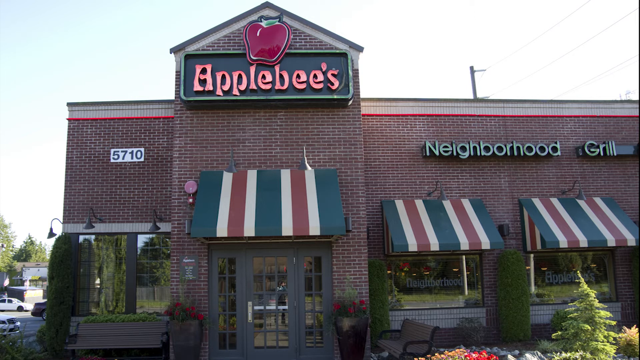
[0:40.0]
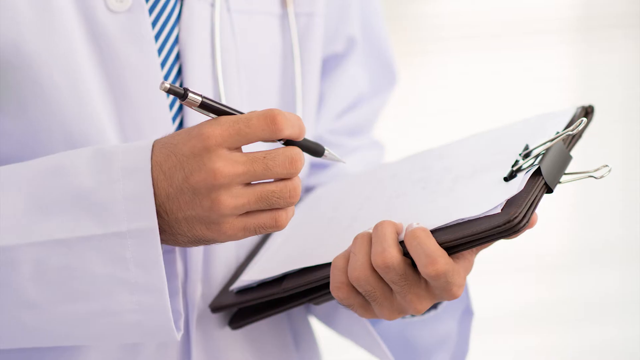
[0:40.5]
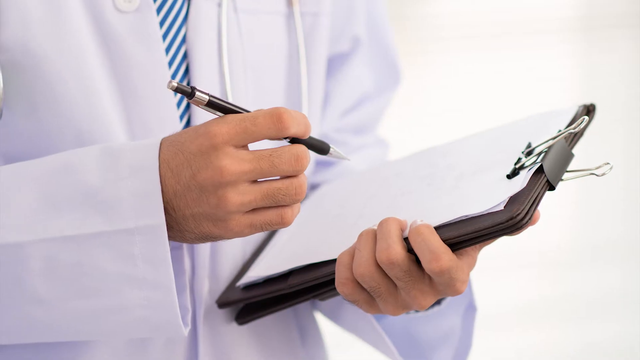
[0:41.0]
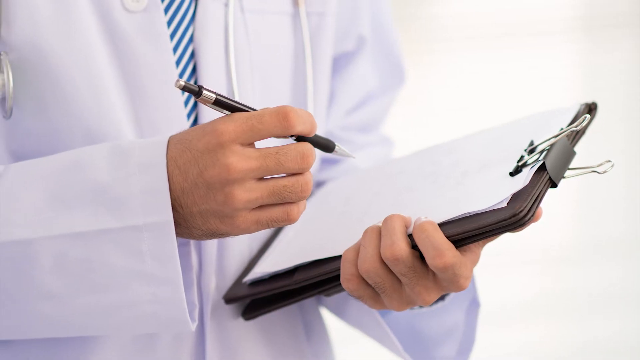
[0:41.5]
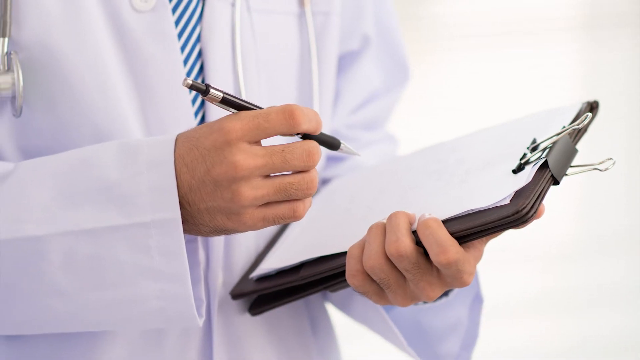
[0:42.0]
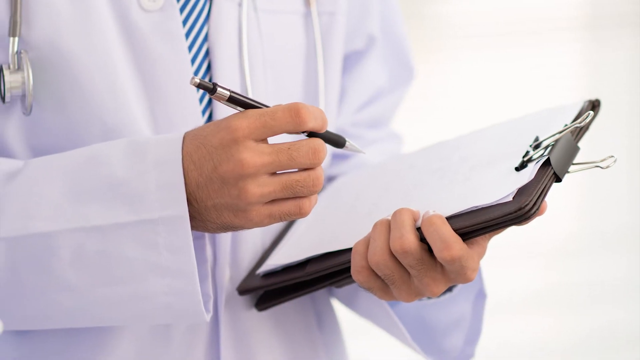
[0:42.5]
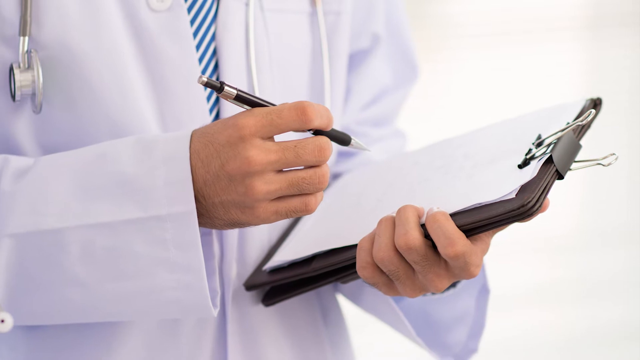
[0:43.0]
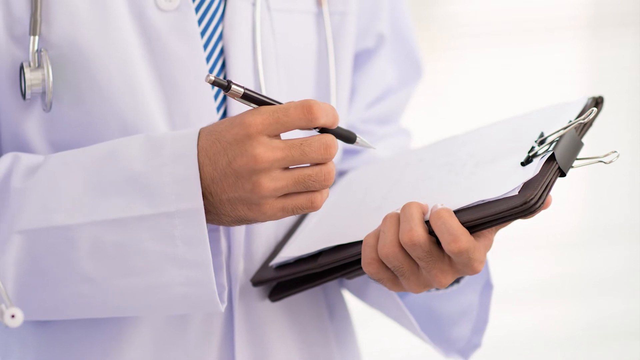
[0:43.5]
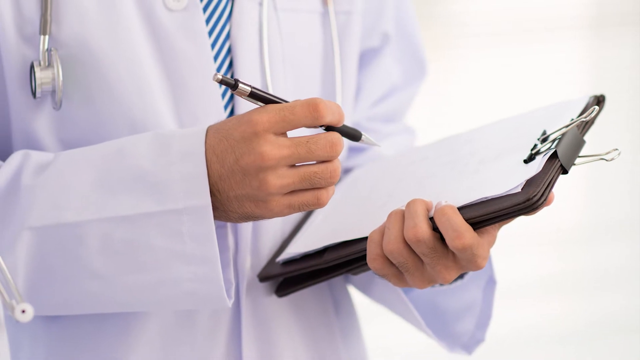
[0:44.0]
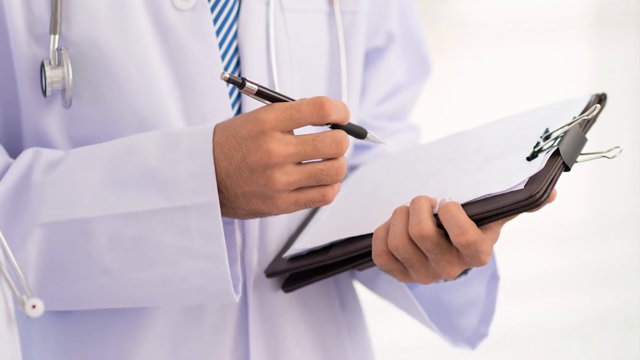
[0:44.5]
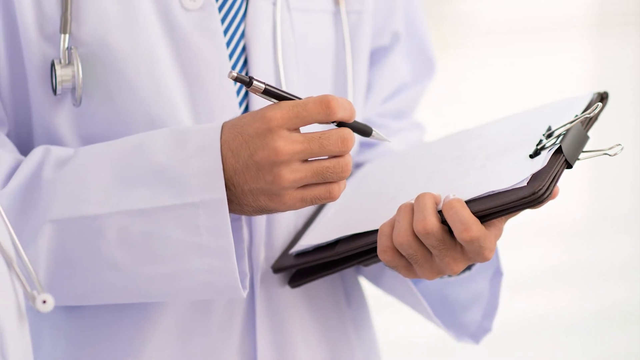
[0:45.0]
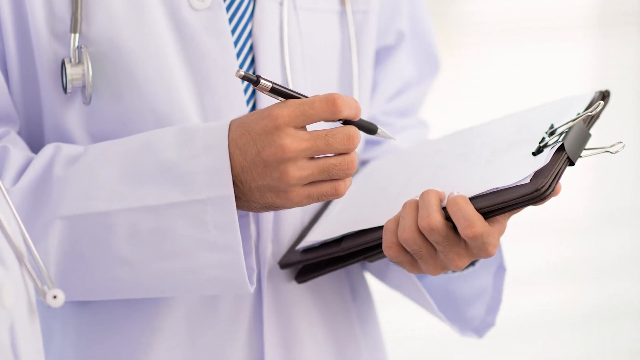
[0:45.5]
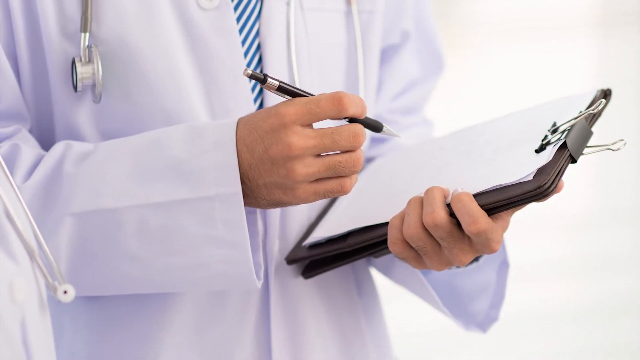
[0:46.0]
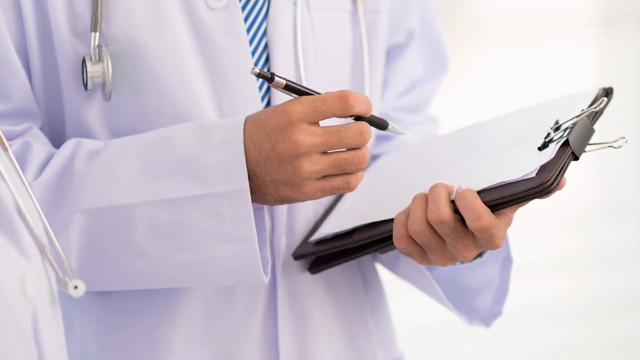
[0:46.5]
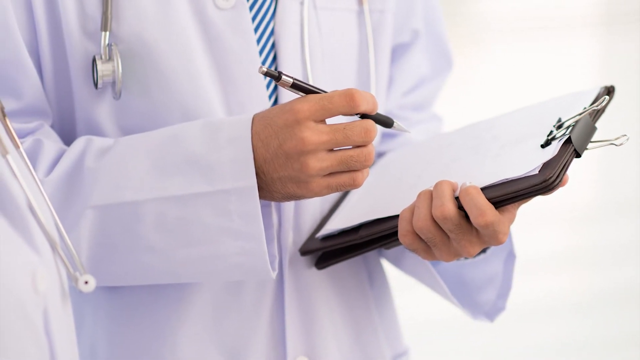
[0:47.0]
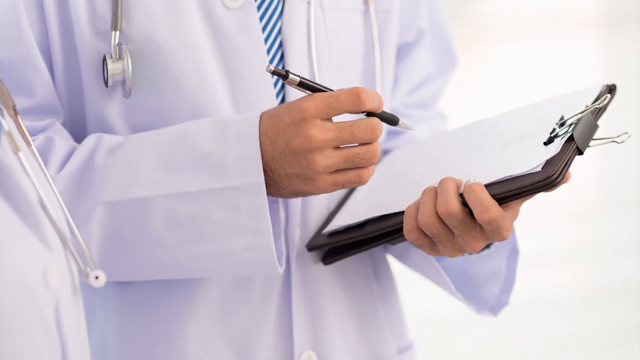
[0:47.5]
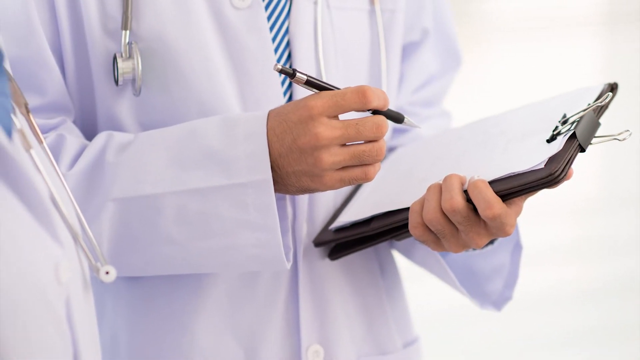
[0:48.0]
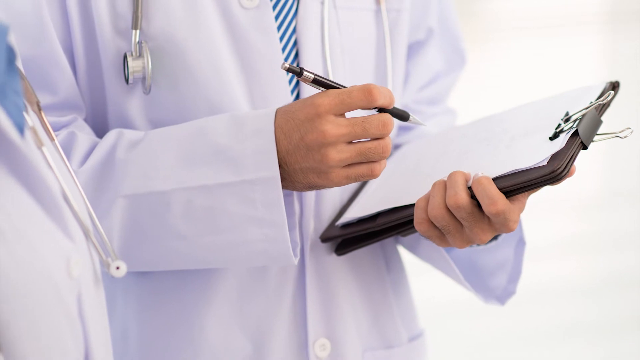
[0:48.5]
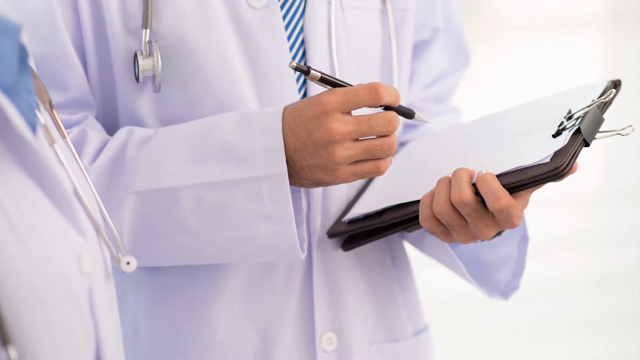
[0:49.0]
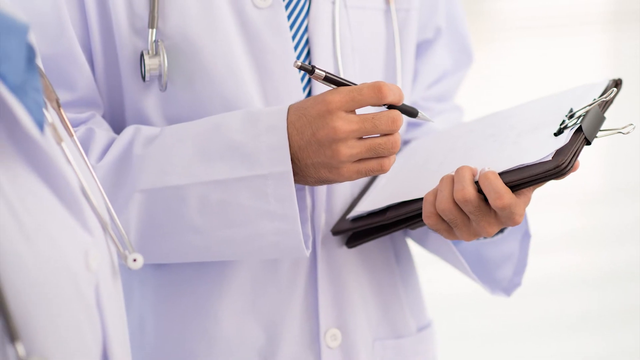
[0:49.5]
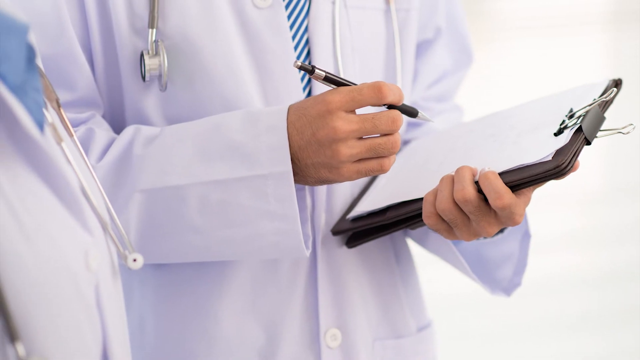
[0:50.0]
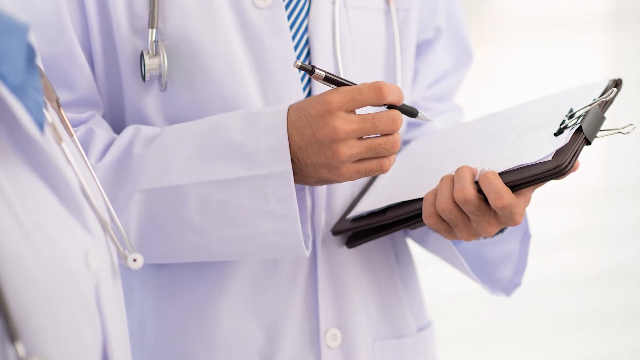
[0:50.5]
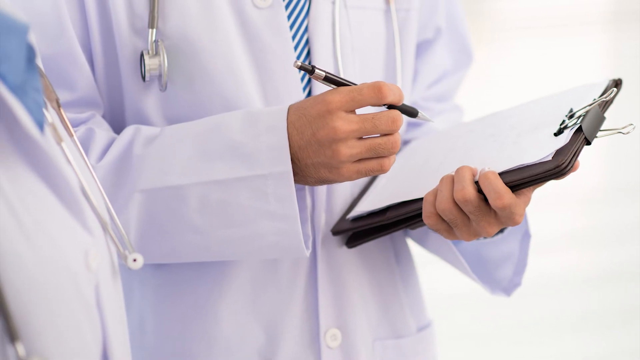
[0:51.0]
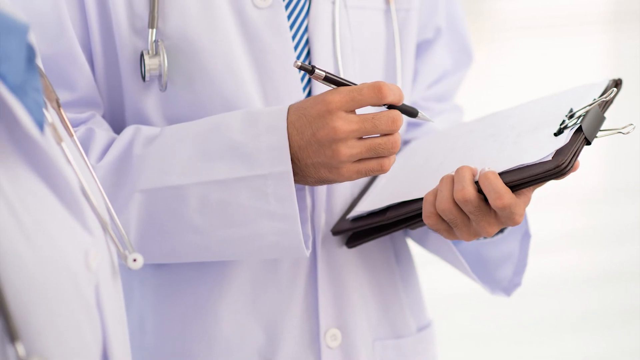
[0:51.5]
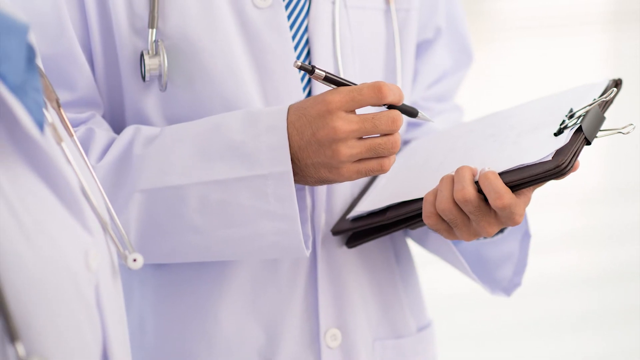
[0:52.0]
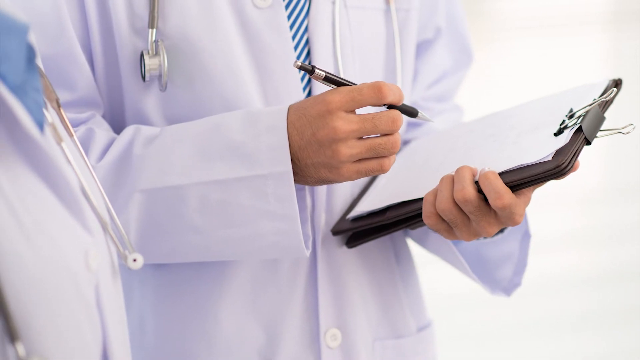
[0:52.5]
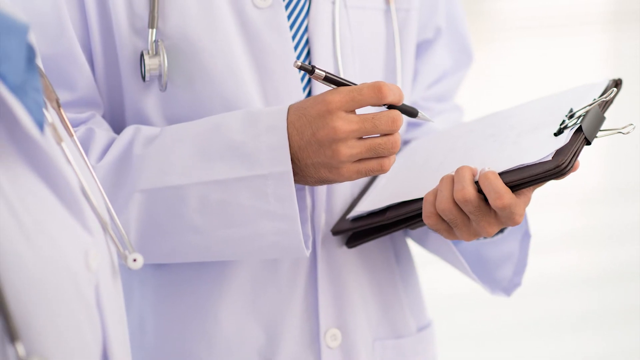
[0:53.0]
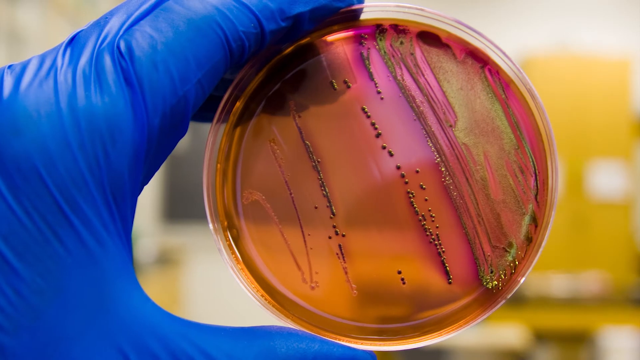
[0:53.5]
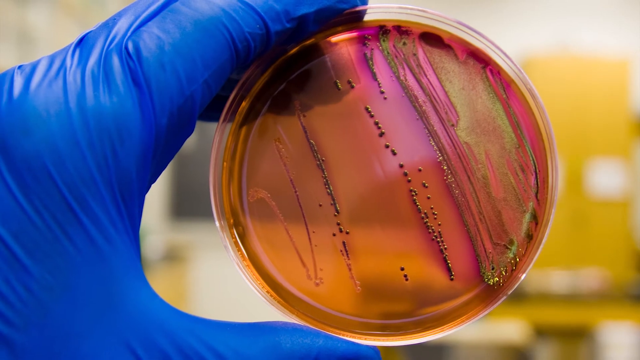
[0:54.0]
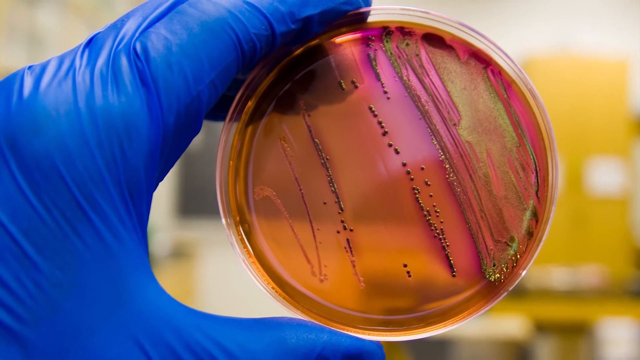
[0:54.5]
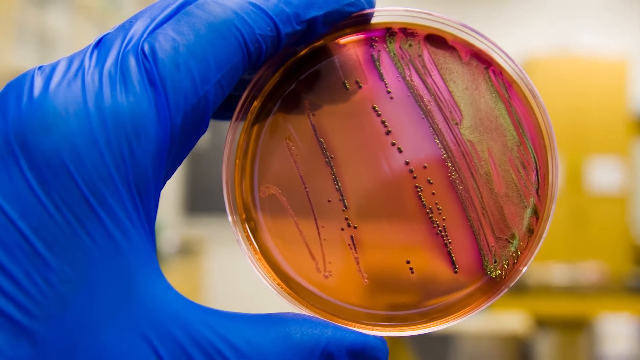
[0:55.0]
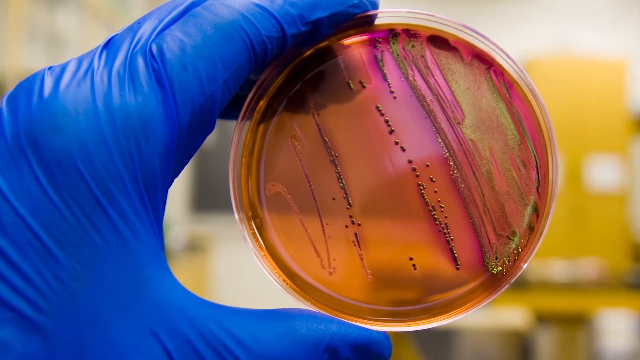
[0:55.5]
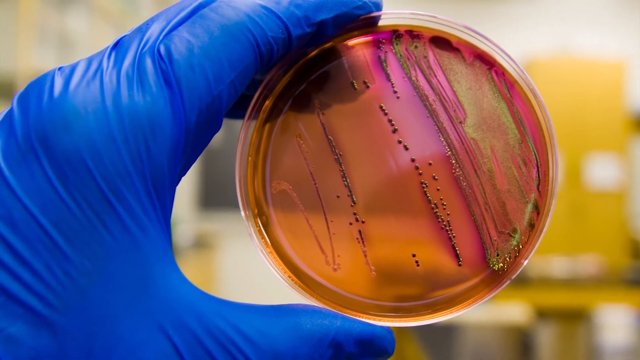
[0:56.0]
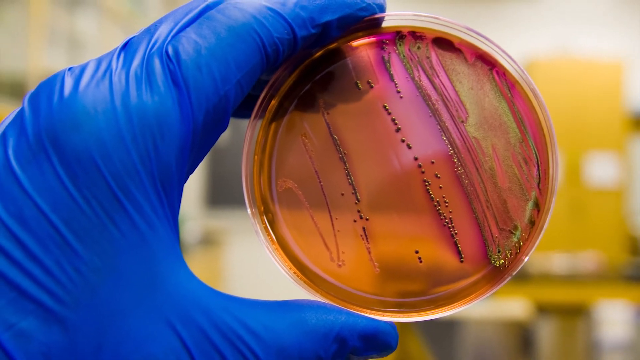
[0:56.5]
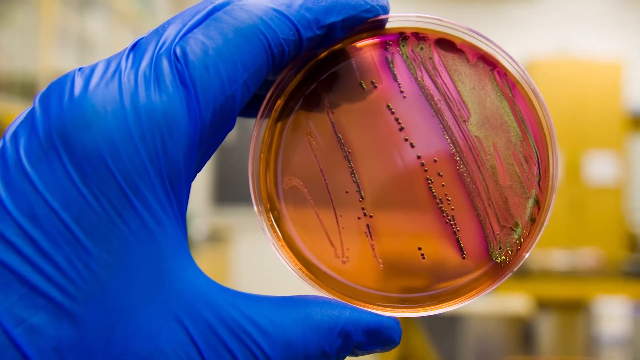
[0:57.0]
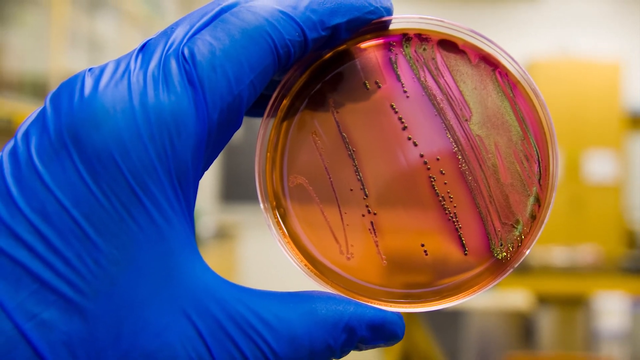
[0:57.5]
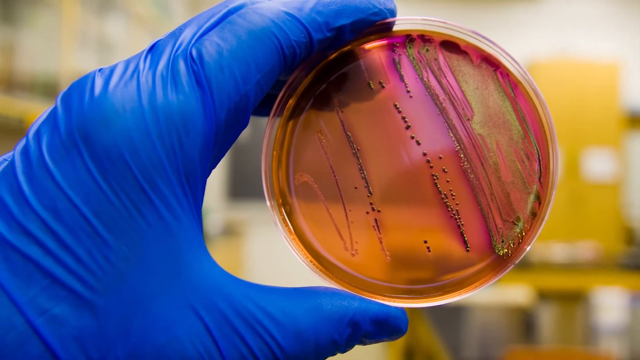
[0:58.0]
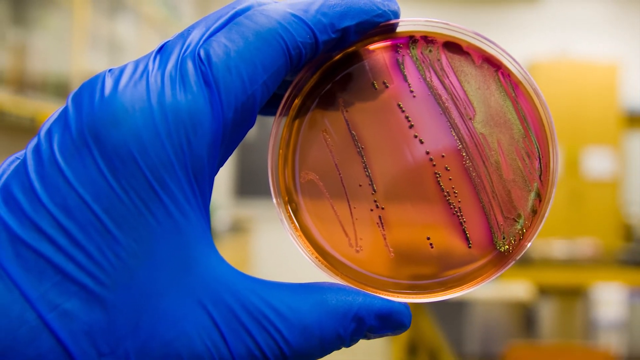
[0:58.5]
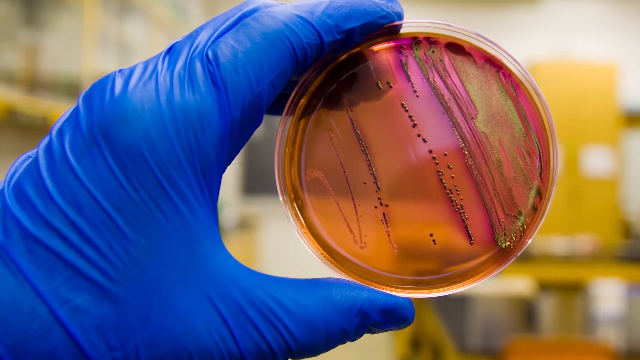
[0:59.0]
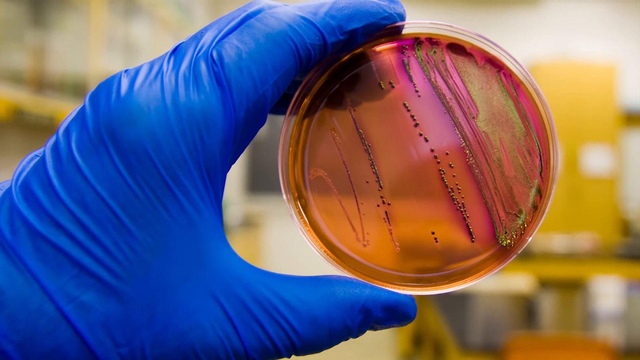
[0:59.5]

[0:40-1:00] A close shot shows what looks like a doctor, with part of his white robe visible and a blue and white diagonally striped tie. In his right hand he holds a black pen with a silver clicker tip and a silver handle. In his left hand he holds a clipboard with a blank sheet of paper, so he looks ready to write. The clipboard has a black binder clip that can be squeezed at the top to open it. The shot zooms out, and a stethoscope is visible hanging around his neck on the left side. To the left is apparently another person, who seems to wear a white coat, with a stethoscope hanging on the front of the shirt. Next, someone wearing blue latex gloves holds up what is almost a specimen tray, seen from the side. It is a clear specimen container with a visible border, holding what looks like orange-red, syrupy-looking material with many little black dots or beads running vertically. The view zooms out a little.